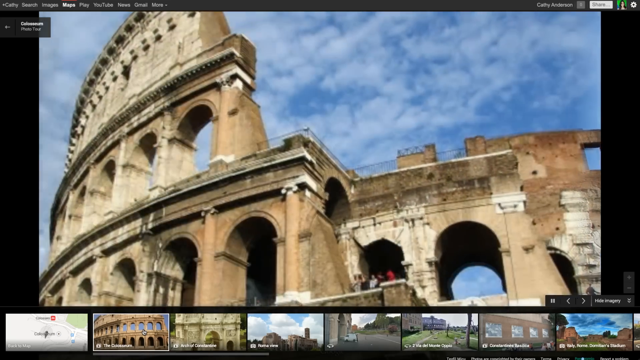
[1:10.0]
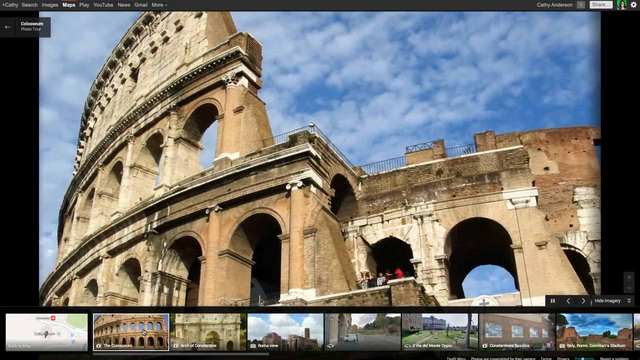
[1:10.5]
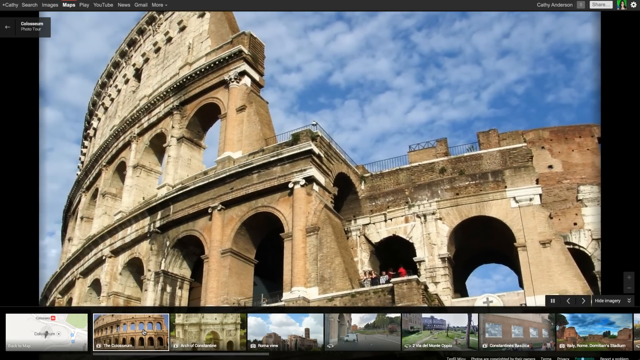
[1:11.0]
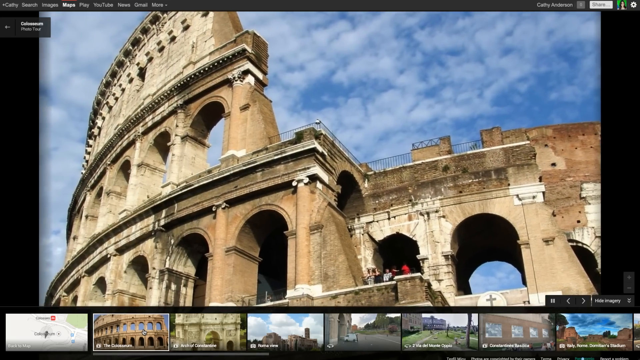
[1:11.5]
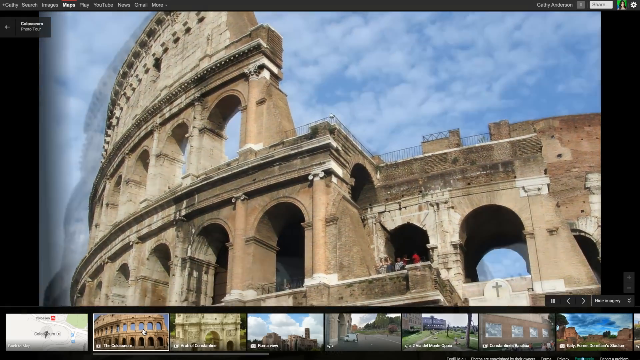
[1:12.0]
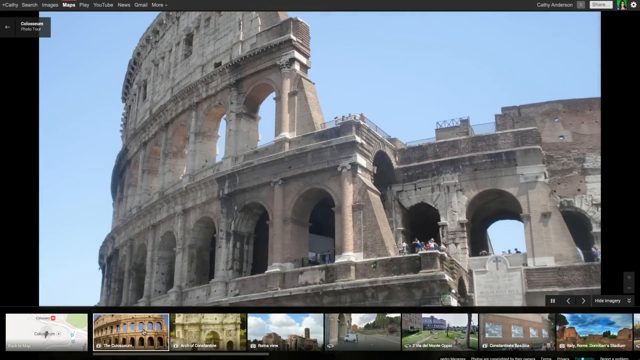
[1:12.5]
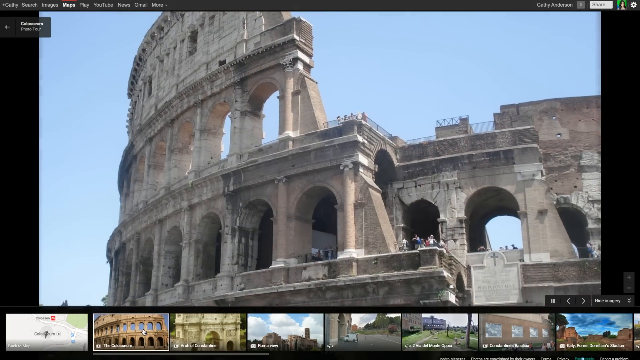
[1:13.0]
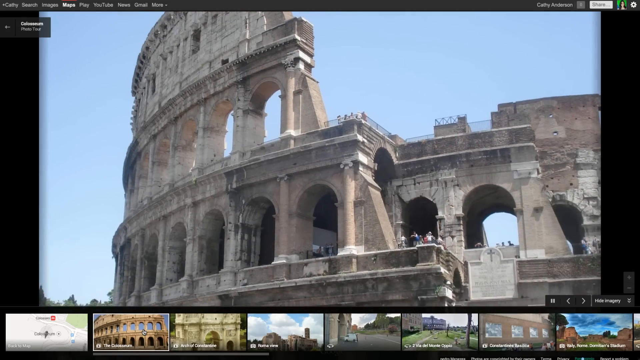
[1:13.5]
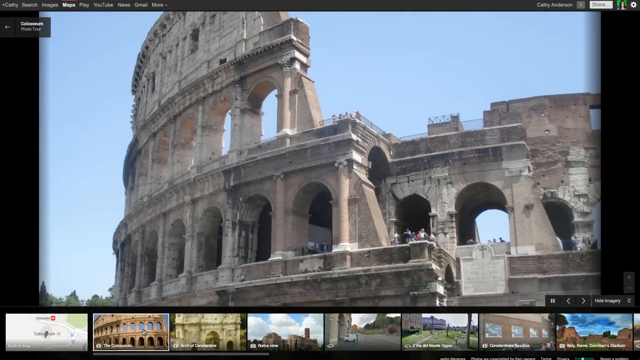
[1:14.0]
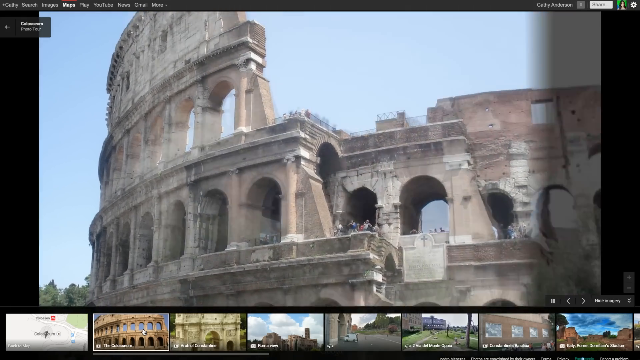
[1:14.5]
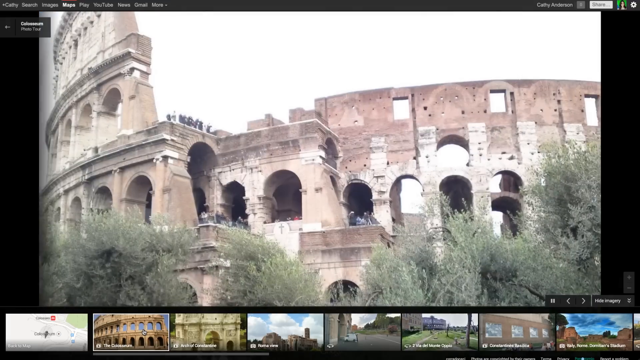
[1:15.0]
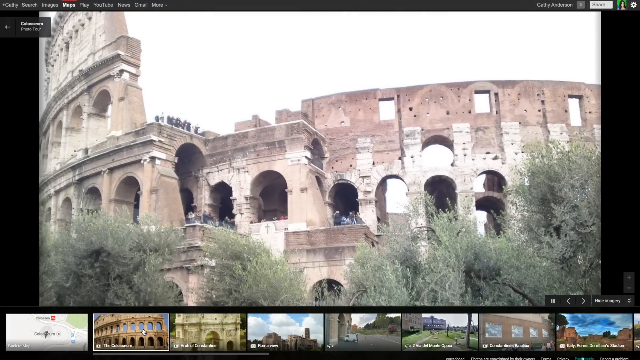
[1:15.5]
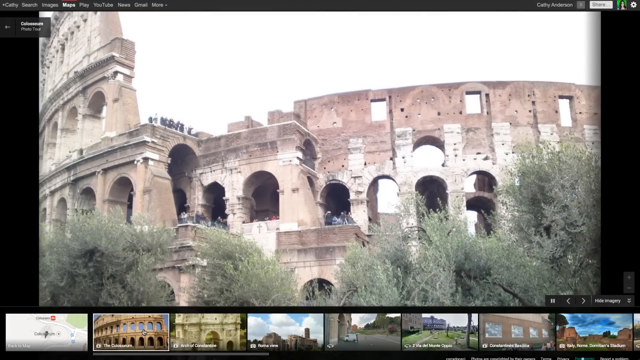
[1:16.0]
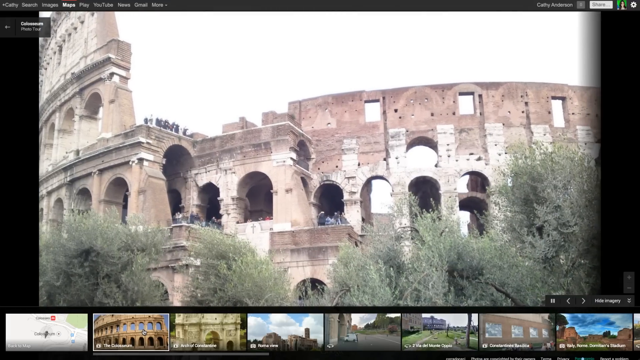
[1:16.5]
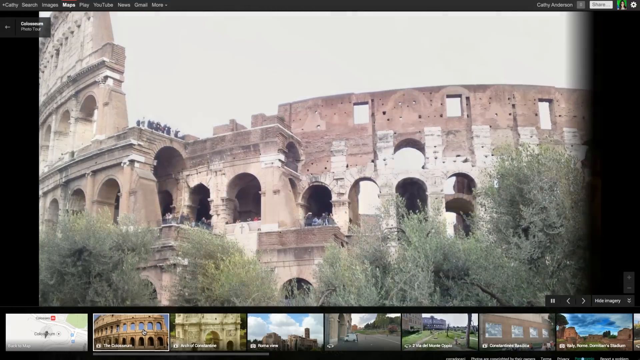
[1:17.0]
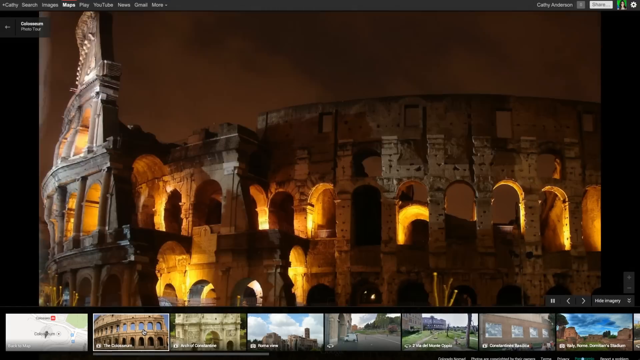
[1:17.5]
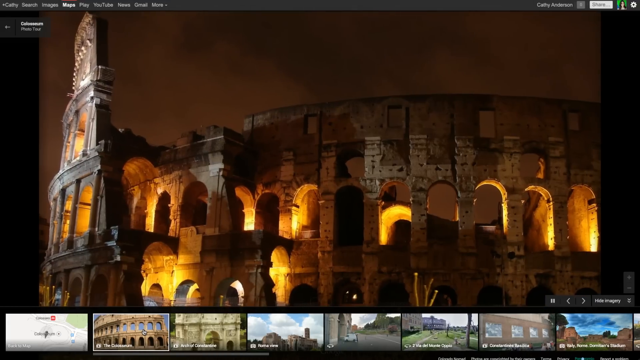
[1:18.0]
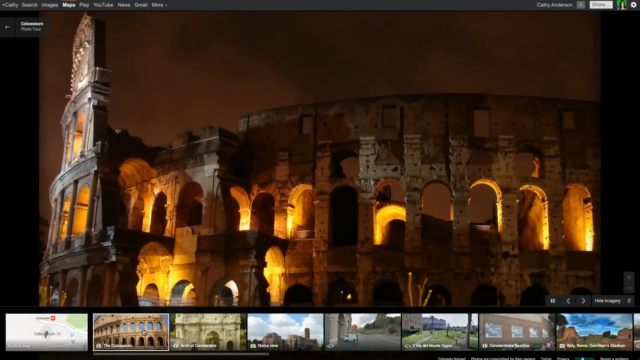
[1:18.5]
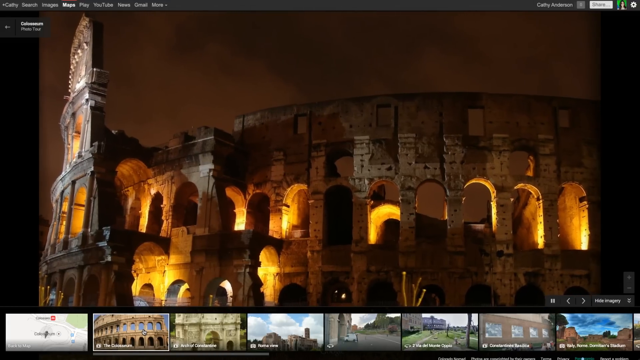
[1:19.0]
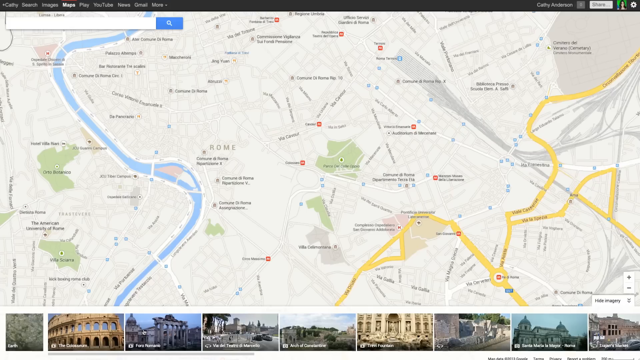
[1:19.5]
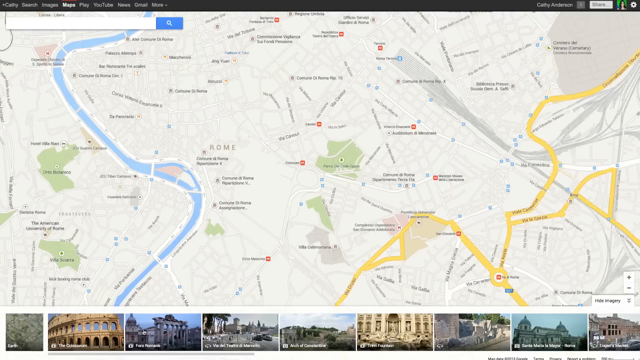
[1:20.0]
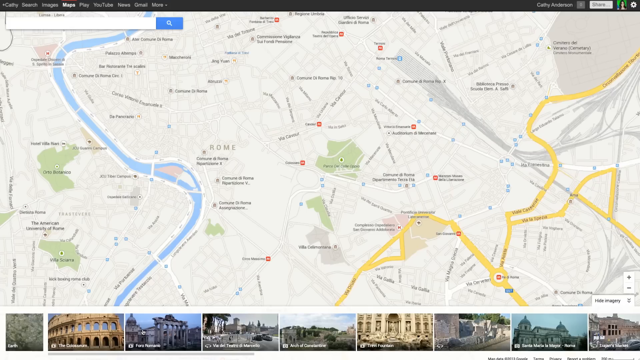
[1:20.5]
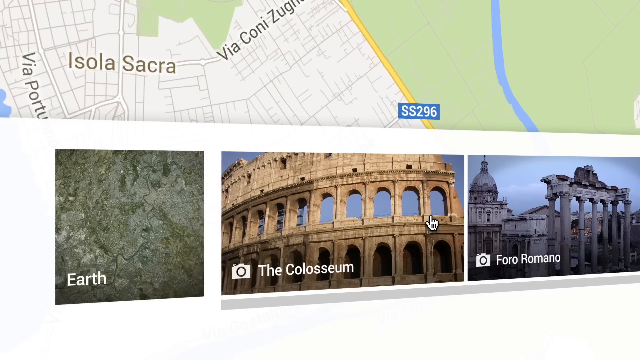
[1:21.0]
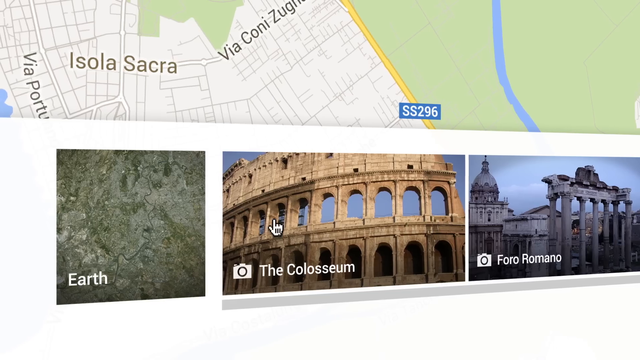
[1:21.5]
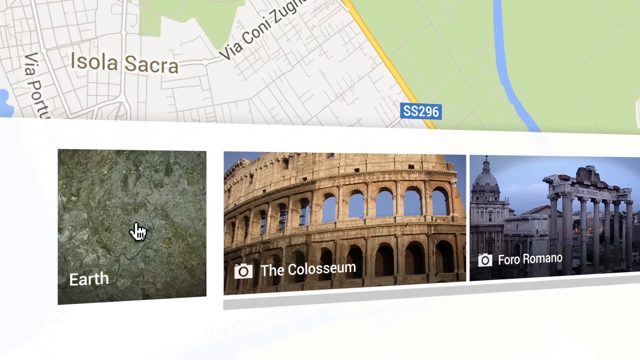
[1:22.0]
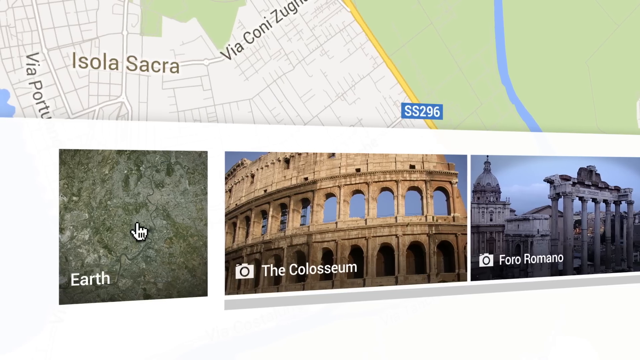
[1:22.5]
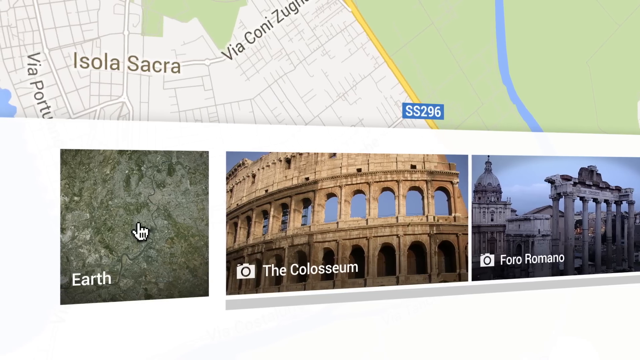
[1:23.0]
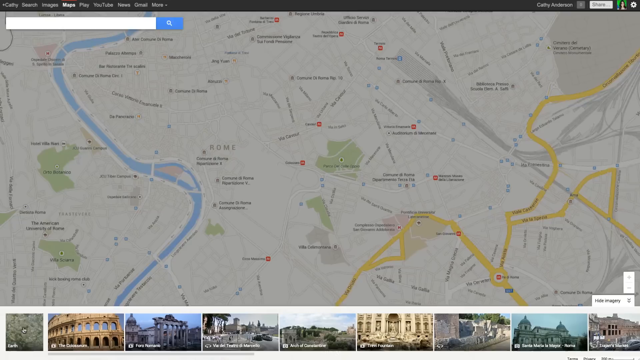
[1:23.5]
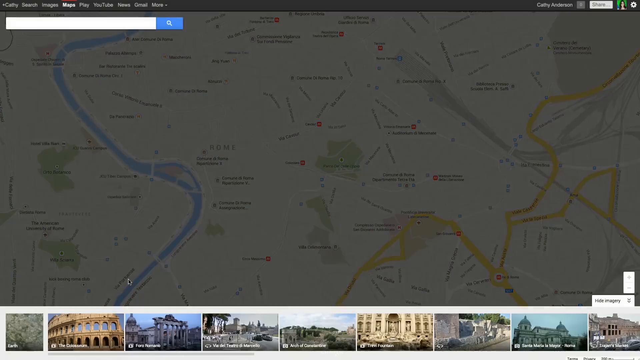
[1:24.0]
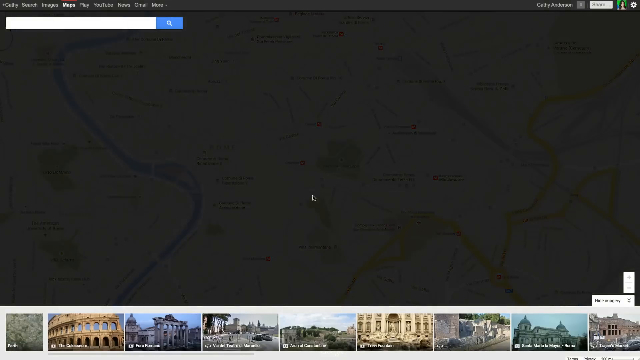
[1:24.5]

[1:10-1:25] The photo tour shows different images of the Coliseum, in its present-day form and apparently at different times of day, with the light changing around it. At one point it is night and the lights on the Coliseum glow around it. The columns are visible, along with an area where part of it looks broken off. Then the view returns to the map, and the person hovers over the scrollable pictures, stopping on one that says "earth", which looks to be the earth from very far away, showing just ground.